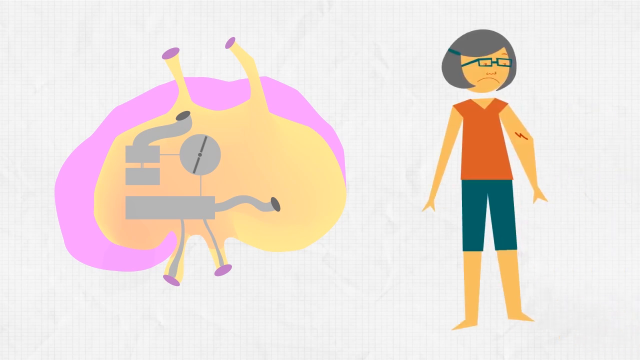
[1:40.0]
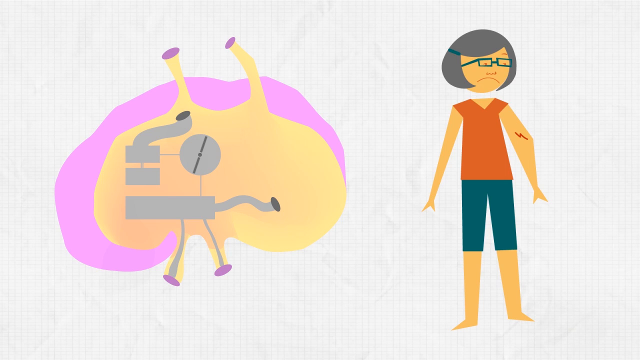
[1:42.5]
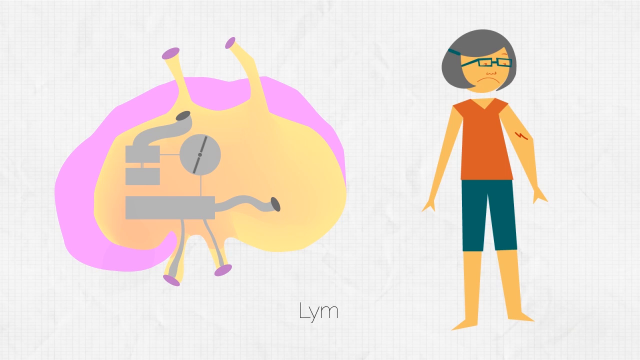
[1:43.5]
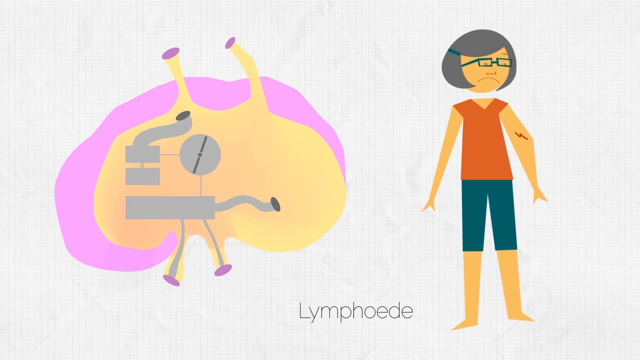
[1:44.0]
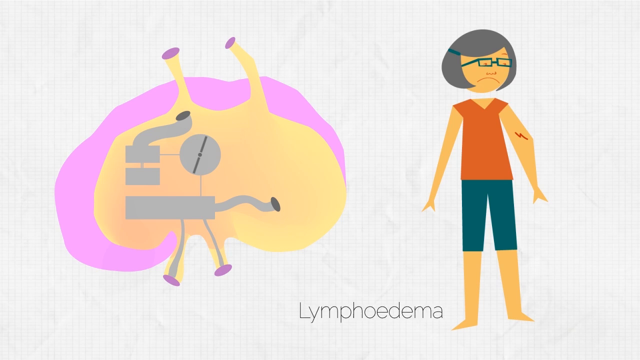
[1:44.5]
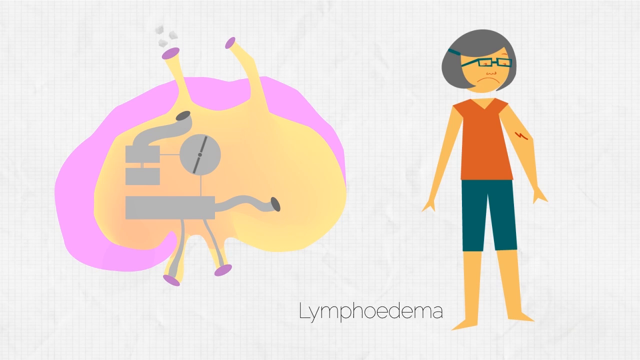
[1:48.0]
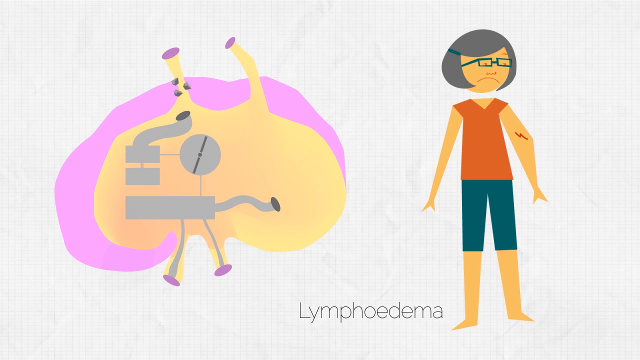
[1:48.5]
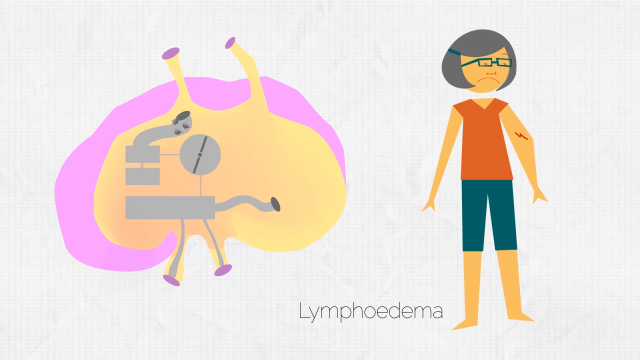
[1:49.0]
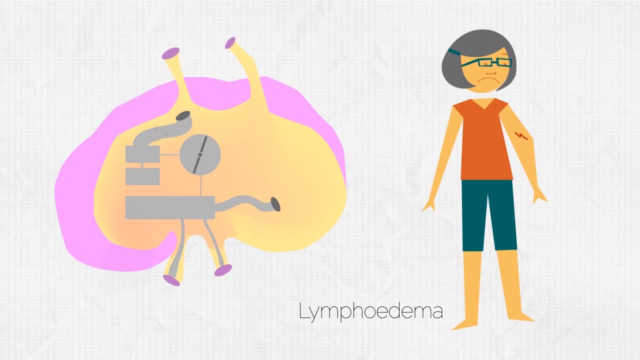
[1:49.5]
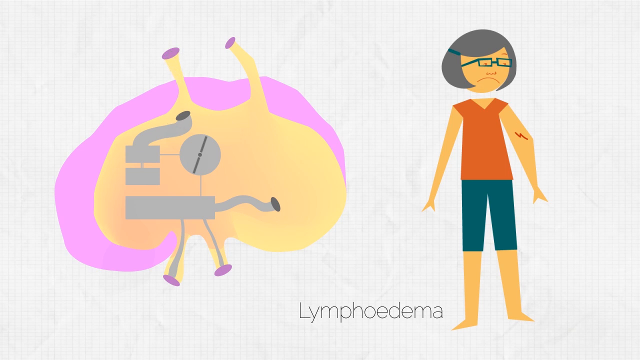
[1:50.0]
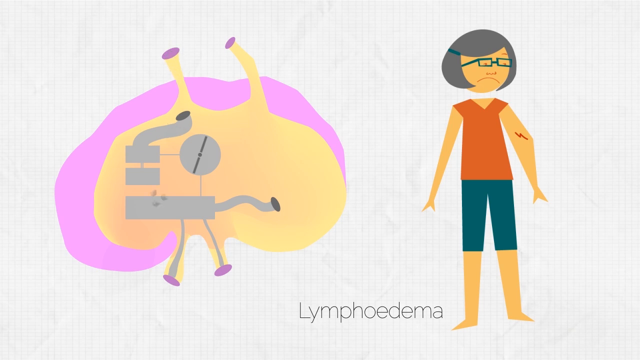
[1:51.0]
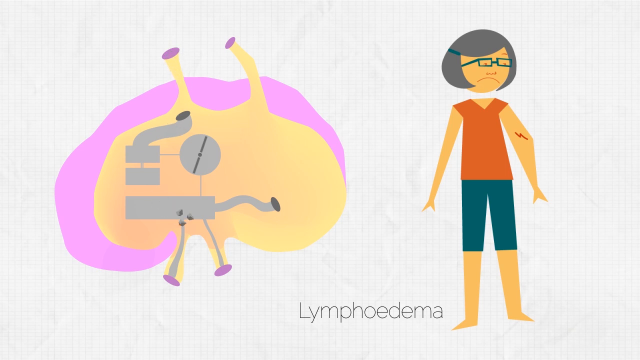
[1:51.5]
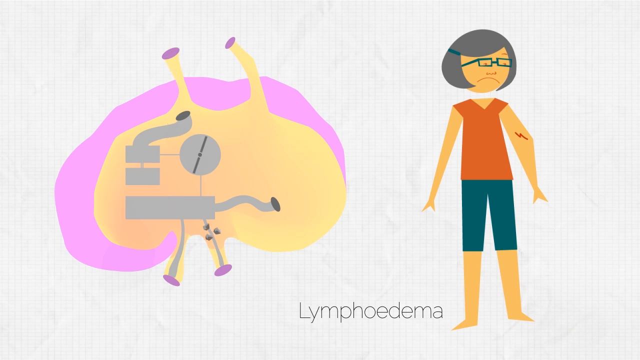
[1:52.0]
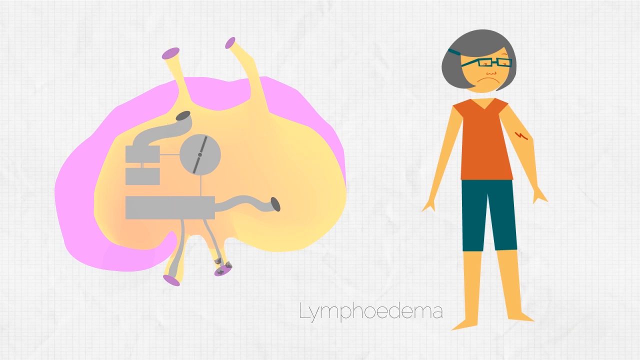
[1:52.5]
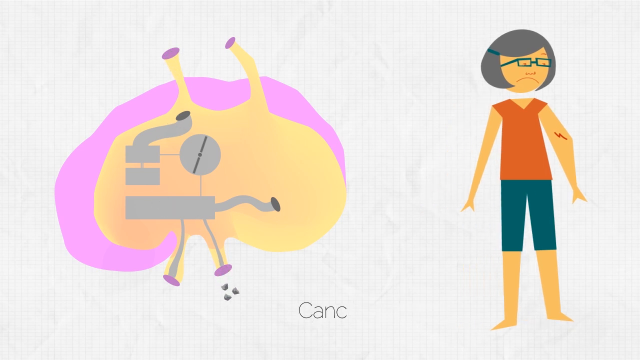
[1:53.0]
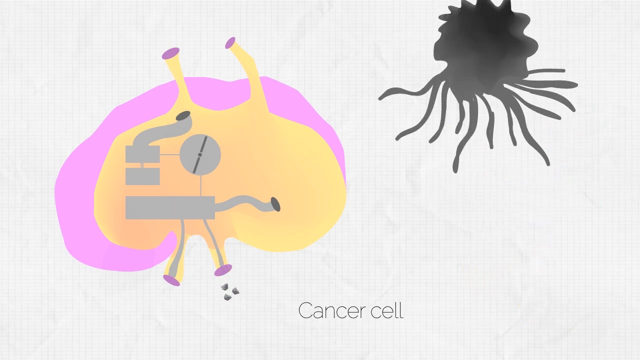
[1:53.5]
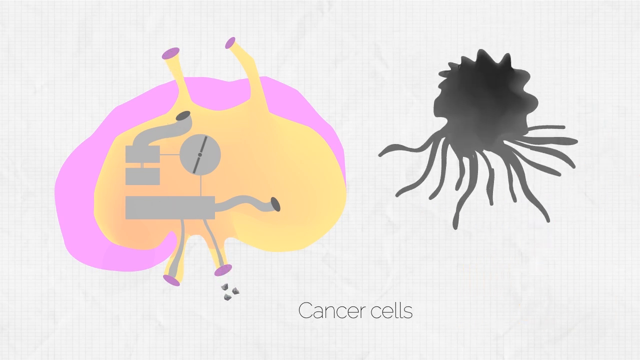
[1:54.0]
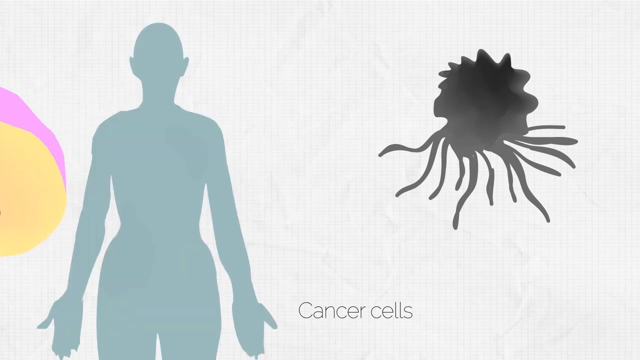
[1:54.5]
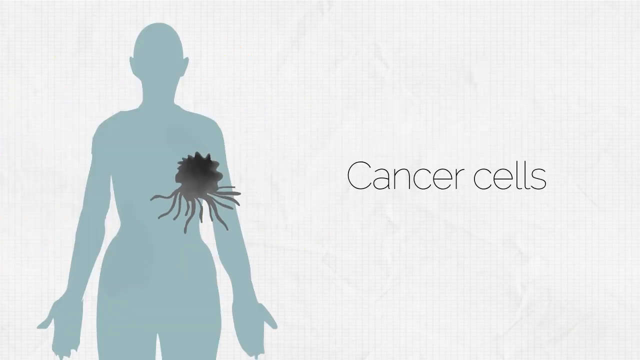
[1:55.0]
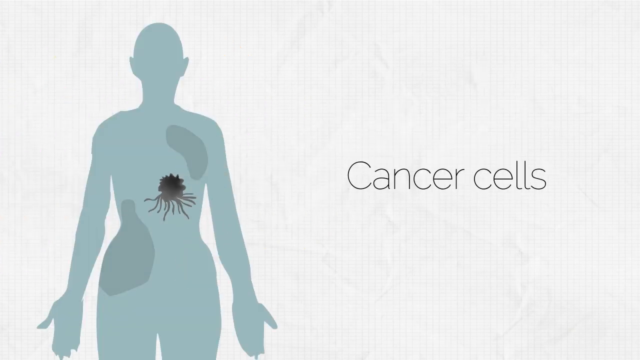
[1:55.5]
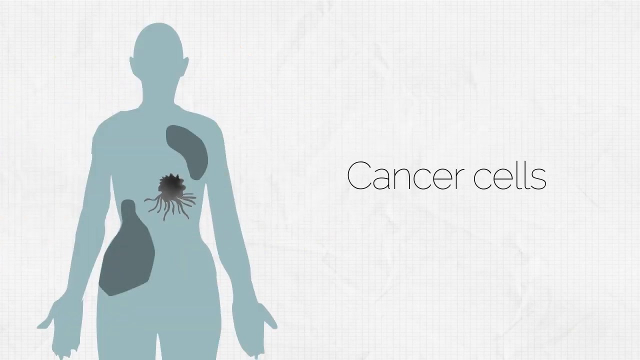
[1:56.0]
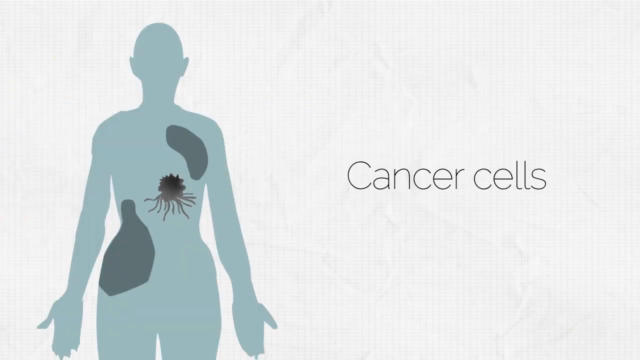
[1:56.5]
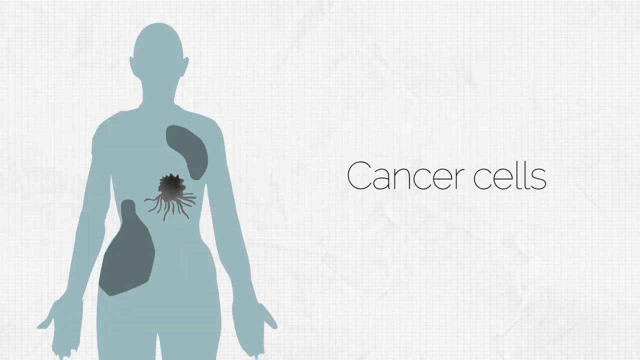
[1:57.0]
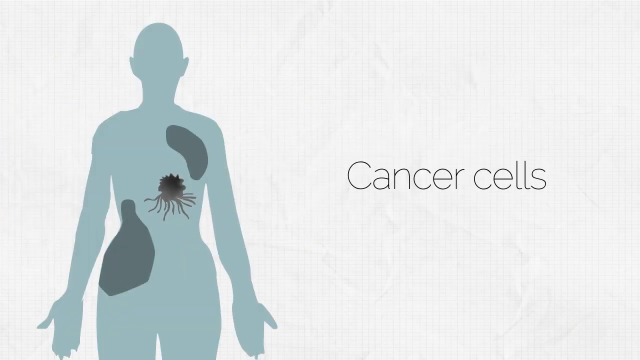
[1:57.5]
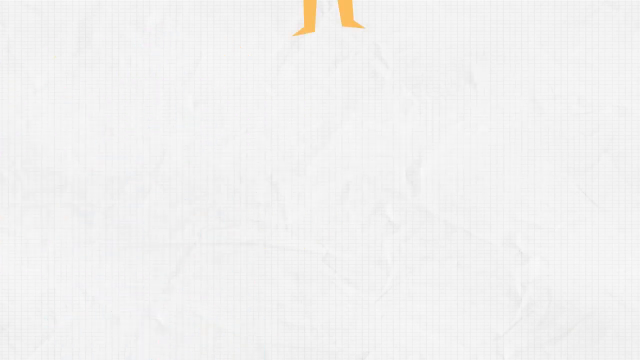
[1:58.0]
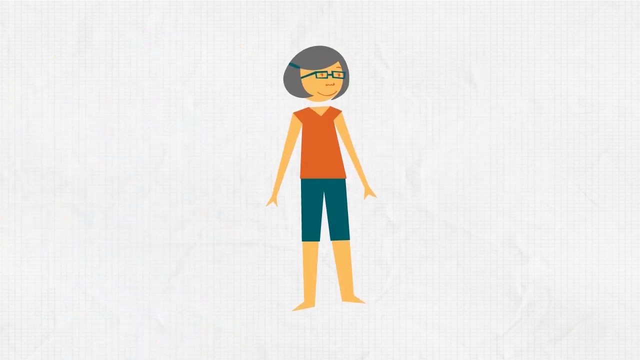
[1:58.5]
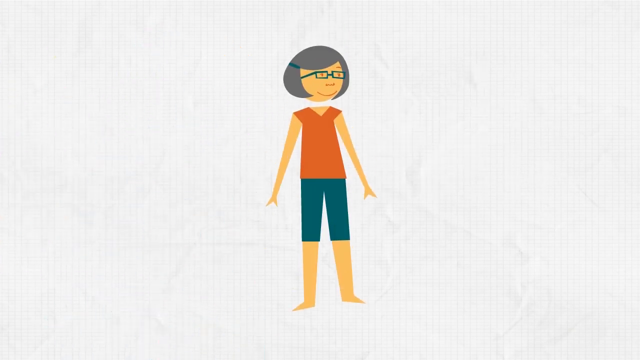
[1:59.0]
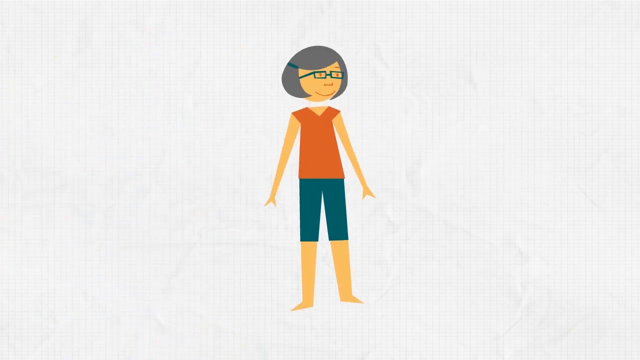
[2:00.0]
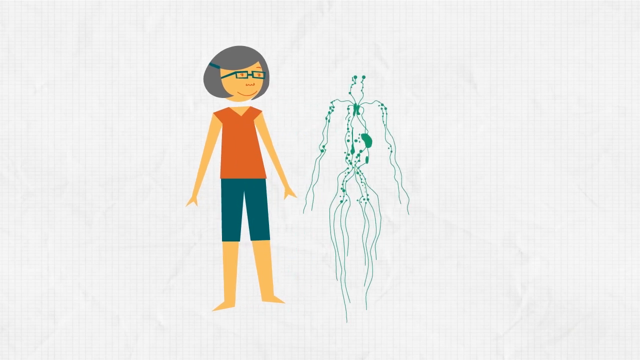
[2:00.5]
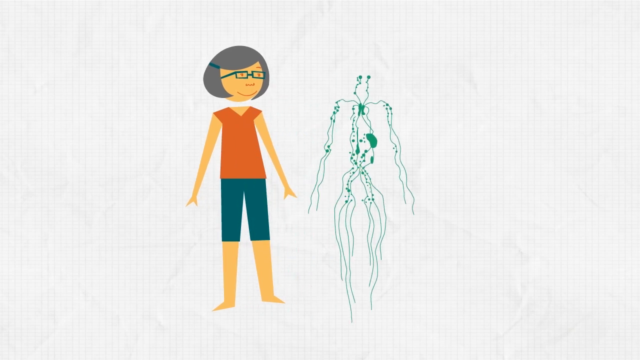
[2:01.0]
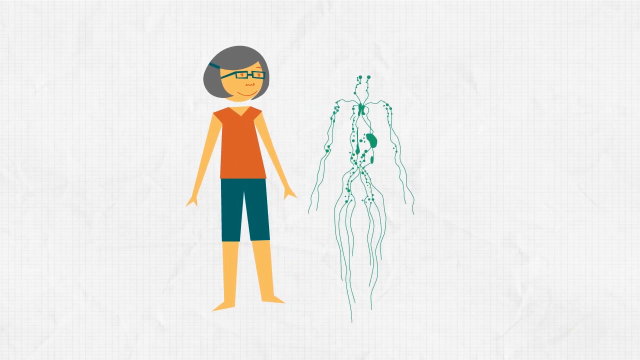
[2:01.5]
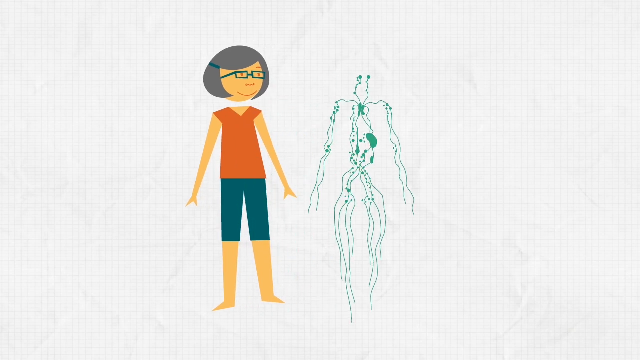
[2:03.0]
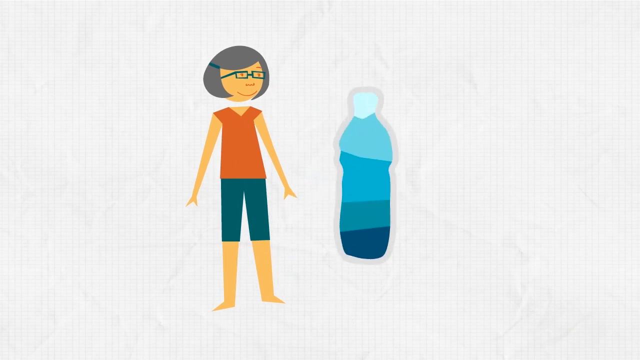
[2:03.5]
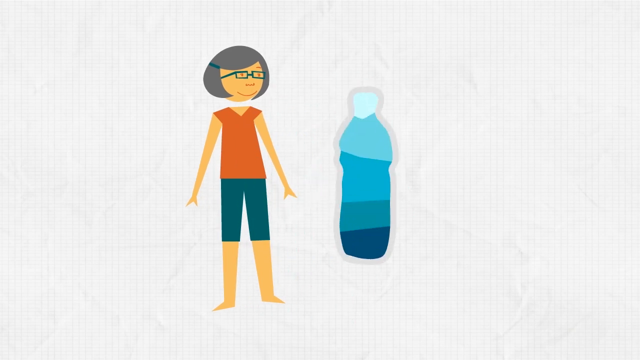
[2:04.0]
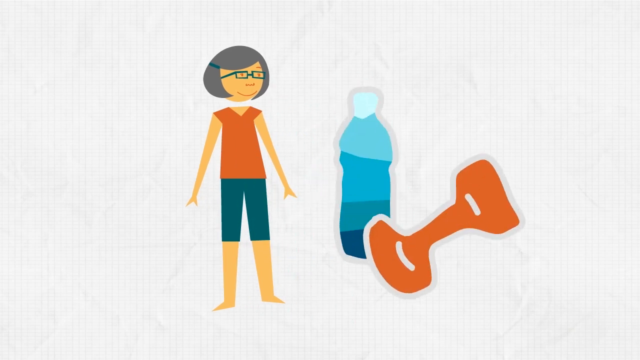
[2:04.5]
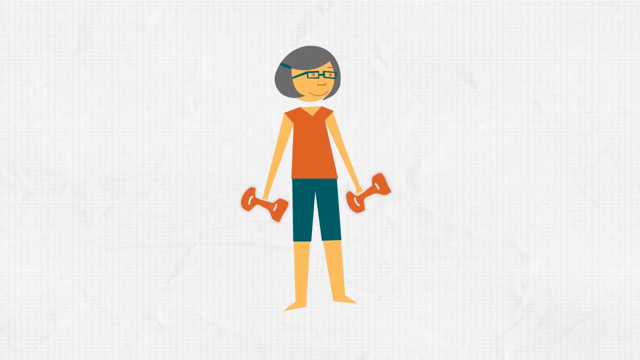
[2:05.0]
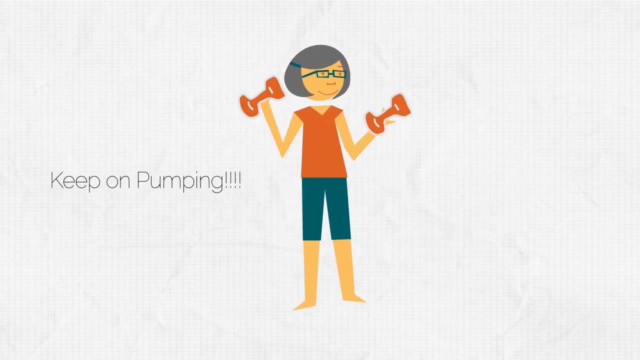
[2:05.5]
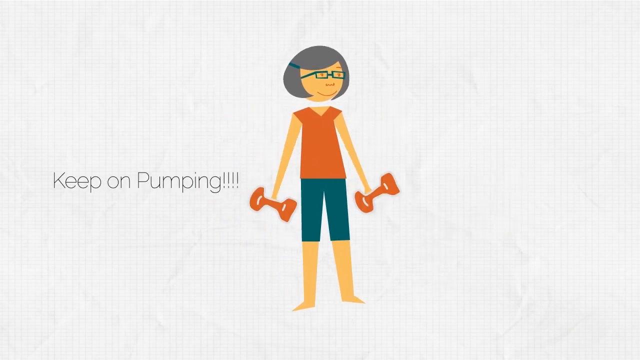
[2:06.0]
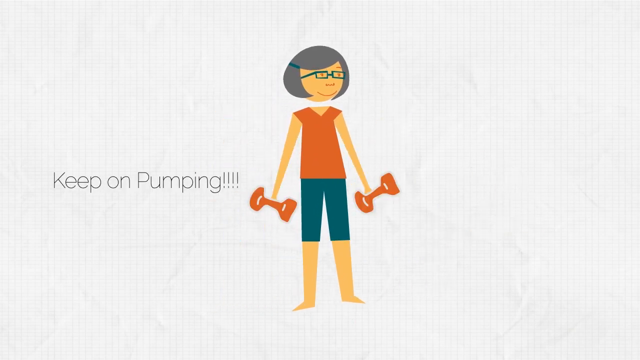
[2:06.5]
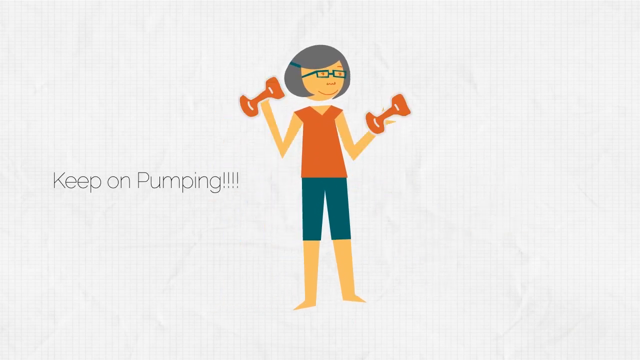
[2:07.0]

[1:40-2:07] The woman is labeled at the lower left, by her foot, "lymphoedema" in the thin black text. The label and the woman then go away, and where "lymphoedema" was, it now says "cancer cells". A big black spider-looking object with a large, irregular, circular black body and lots of little legs coming out of the bottom comes down from the upper right. As it comes down, on the left the little debris passes through the organ and leaves through one of the bottom tubes. The organ graphic then disappears, and the silhouette of the woman returns, empty and a solid kind of blue-gray color. "Cancer cells" is now at the upper right, in what looks like a slightly bigger font. The black spider lodges itself in her torso, and two irregular dark black splotches appear, one on her left shoulder (the viewer's right) and one on her right hip (the viewer's left). That goes away, and on a white background the cartoon woman from the beginning is in the middle, looking a little off to the right. To the right, a kind of silhouette of just the green veins and splotches from the earlier silhouette appears by itself, outside any body outline, and then goes away. A bottle-shaped image appears, dark blue at the bottom, progressively lighter blue, and white at the top, and an orange cartoon barbell flashes up over the top of it. Those two things on the right go away, and the woman is shown holding two barbells, looking like she is lifting them by bending at the elbows, as black text appears reading "keep on pumping" with exclamation points at the end.